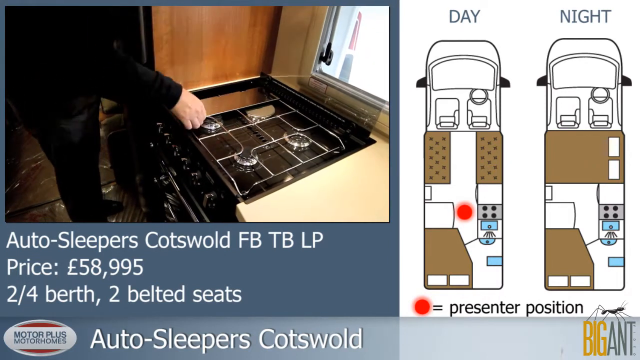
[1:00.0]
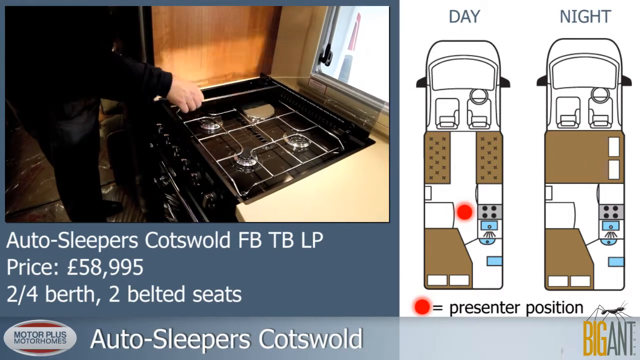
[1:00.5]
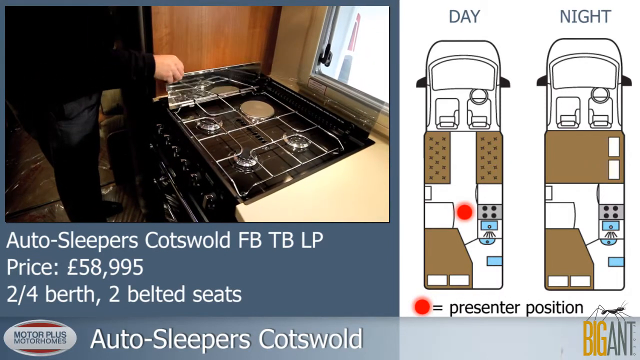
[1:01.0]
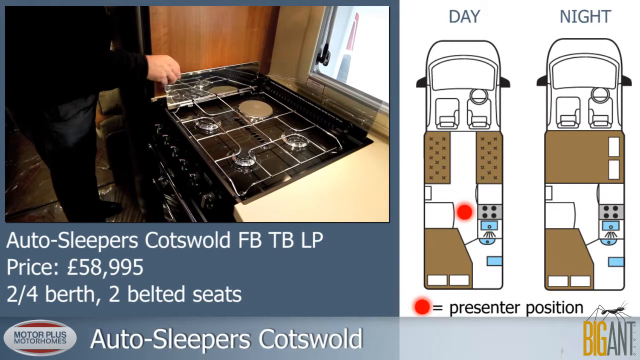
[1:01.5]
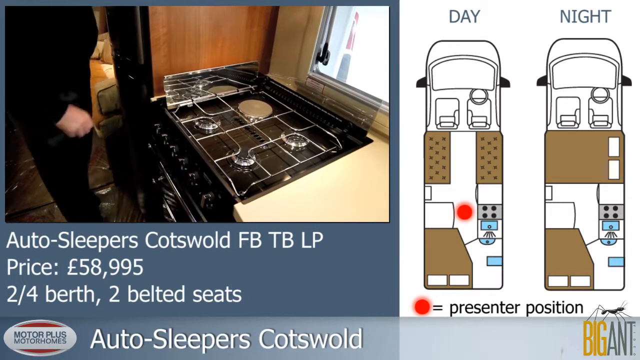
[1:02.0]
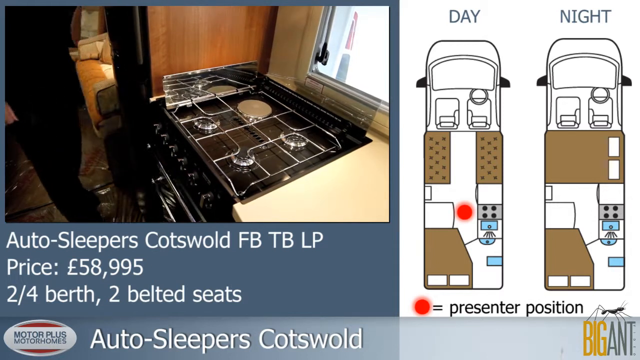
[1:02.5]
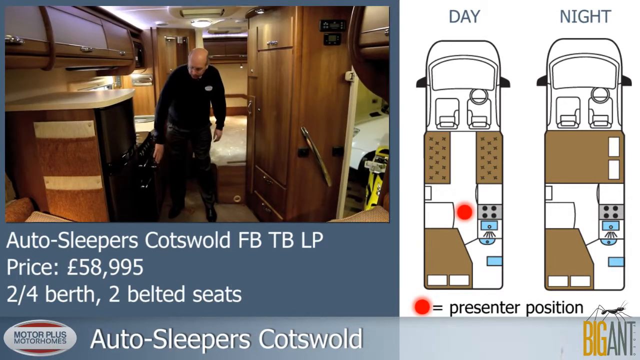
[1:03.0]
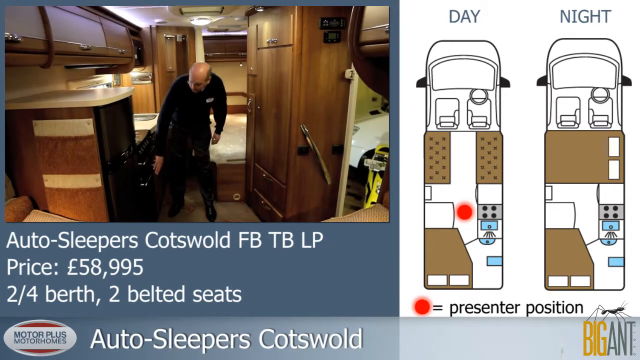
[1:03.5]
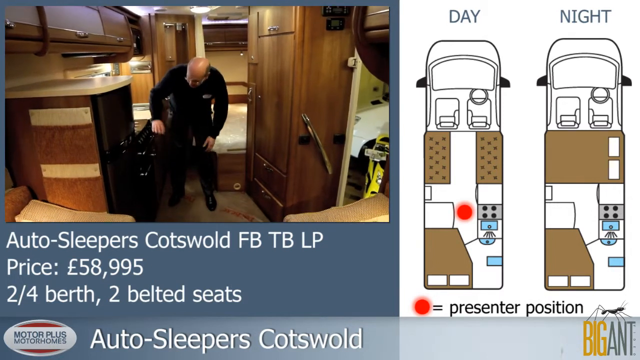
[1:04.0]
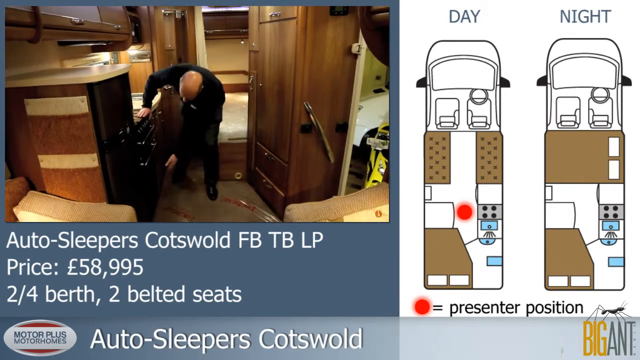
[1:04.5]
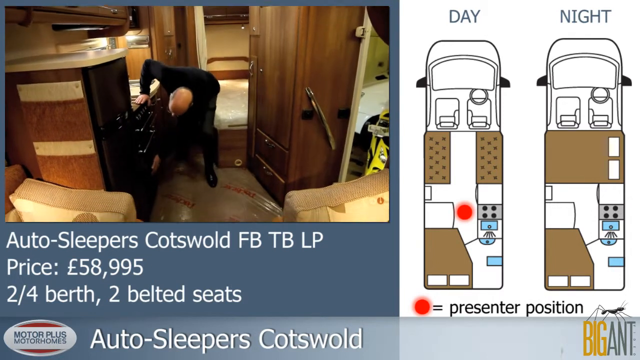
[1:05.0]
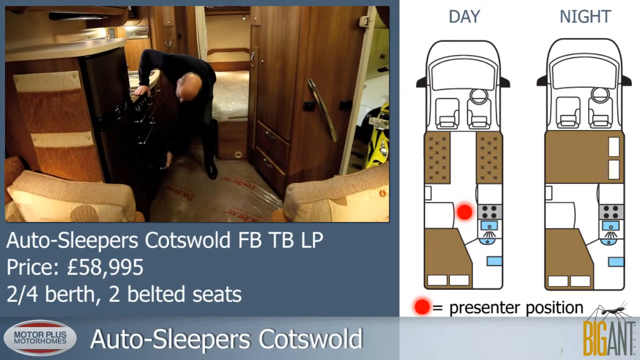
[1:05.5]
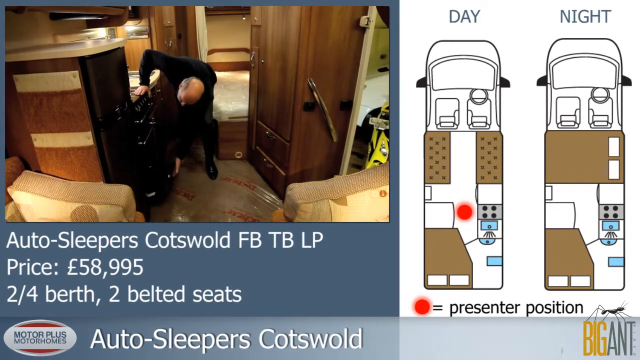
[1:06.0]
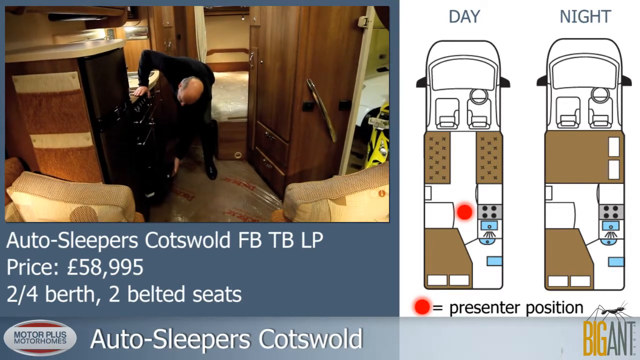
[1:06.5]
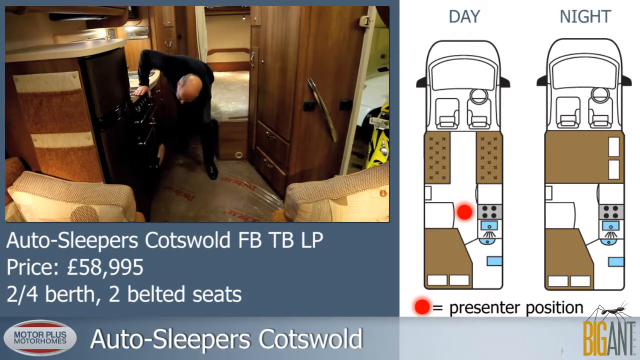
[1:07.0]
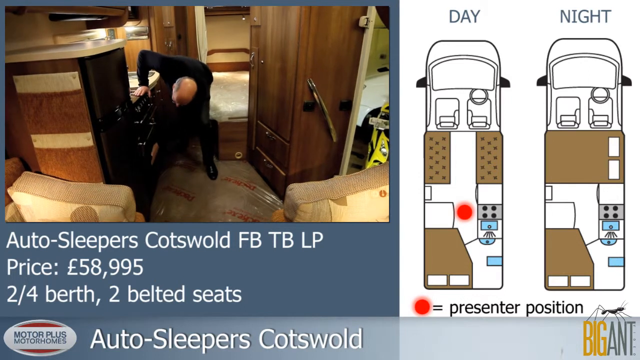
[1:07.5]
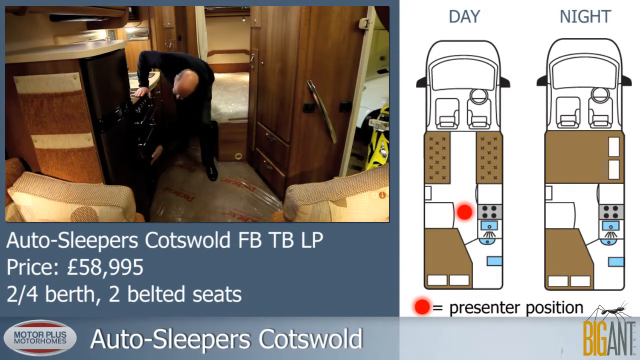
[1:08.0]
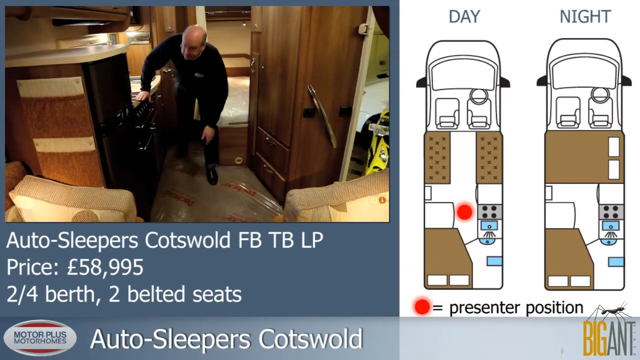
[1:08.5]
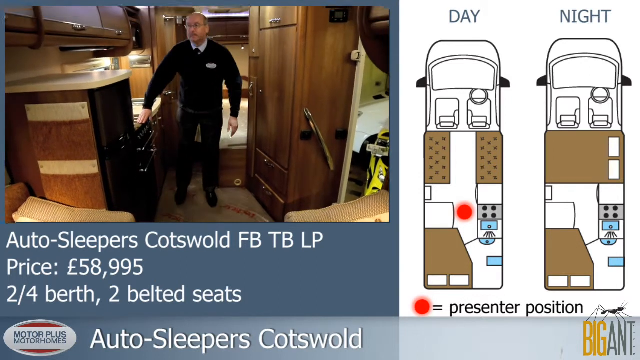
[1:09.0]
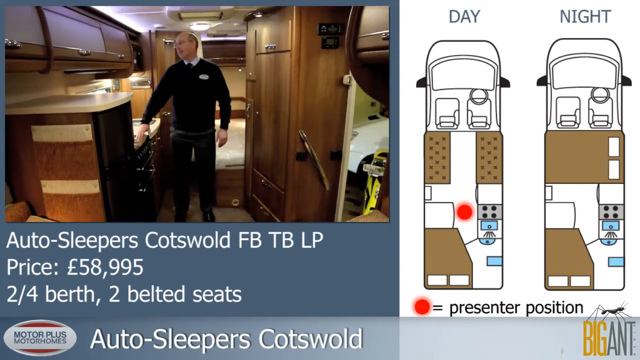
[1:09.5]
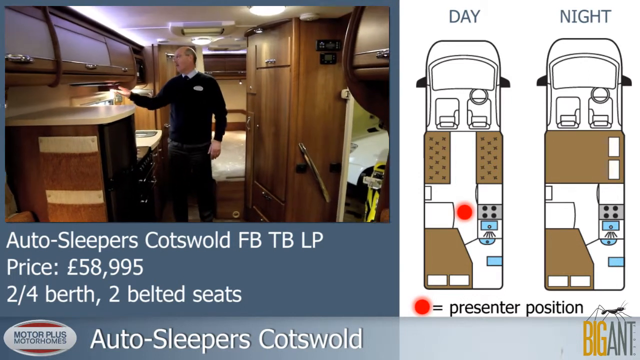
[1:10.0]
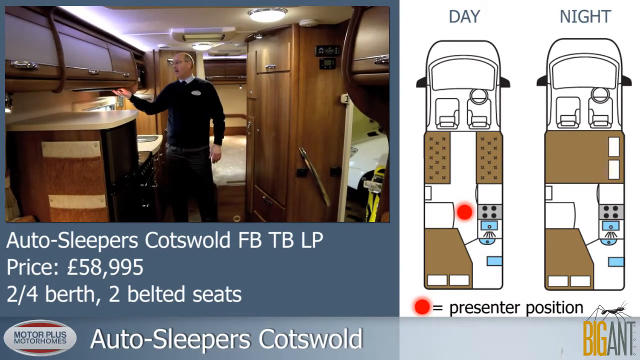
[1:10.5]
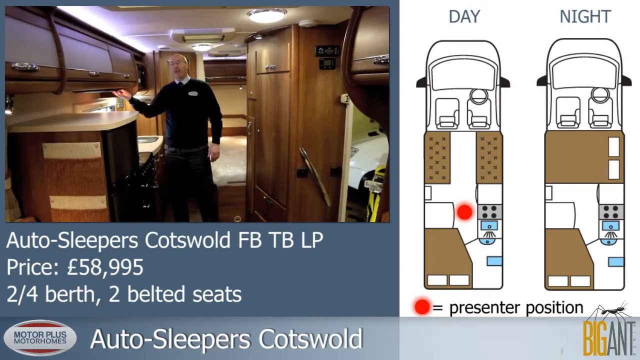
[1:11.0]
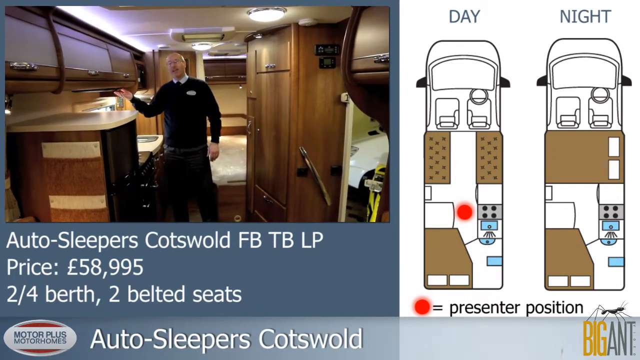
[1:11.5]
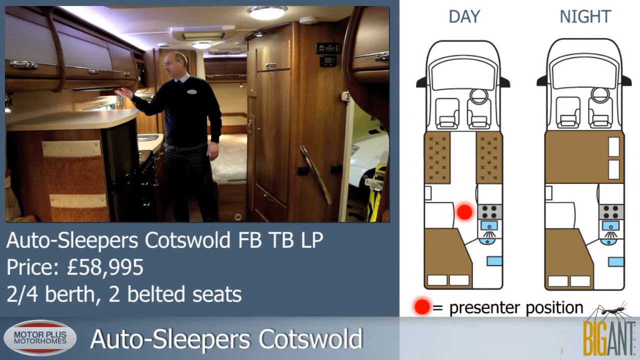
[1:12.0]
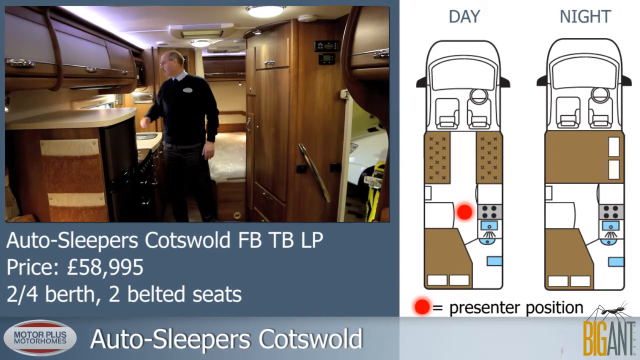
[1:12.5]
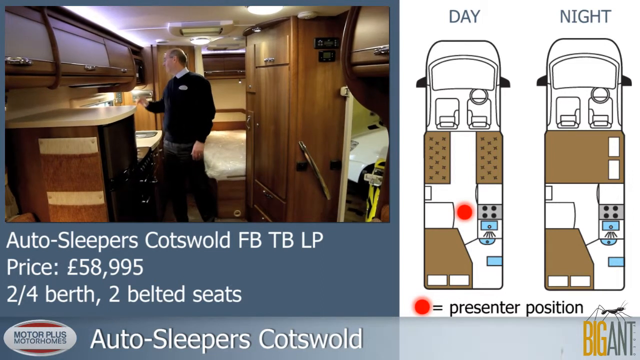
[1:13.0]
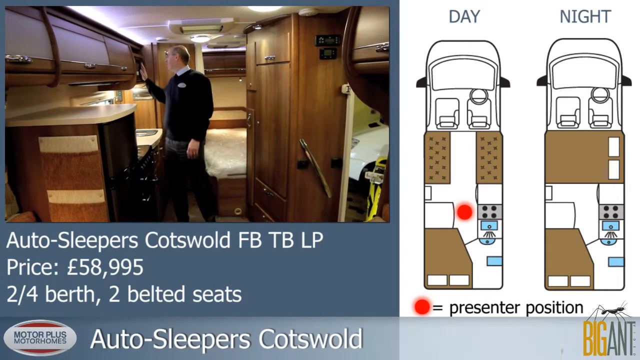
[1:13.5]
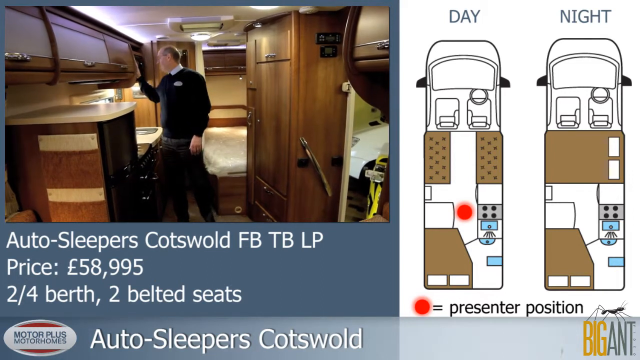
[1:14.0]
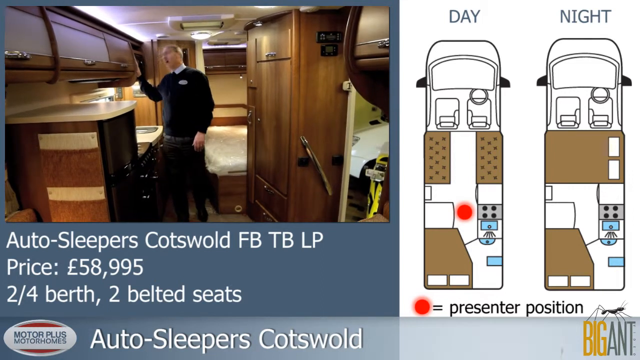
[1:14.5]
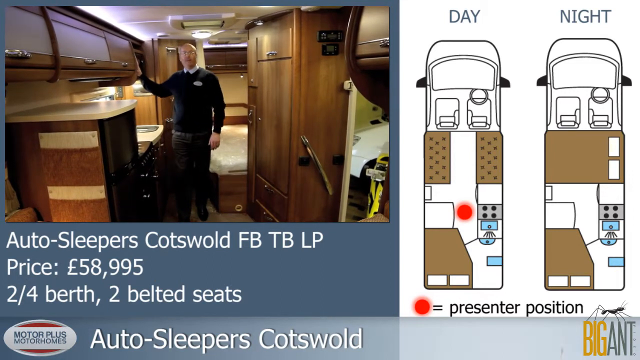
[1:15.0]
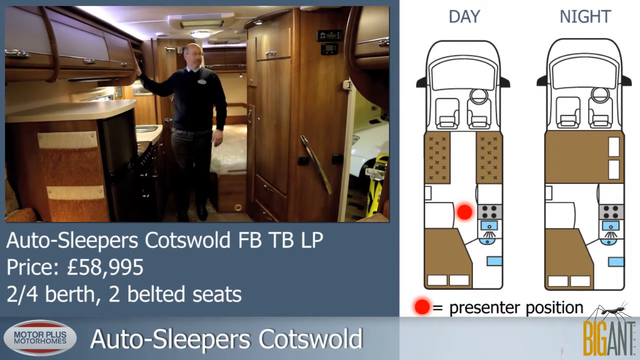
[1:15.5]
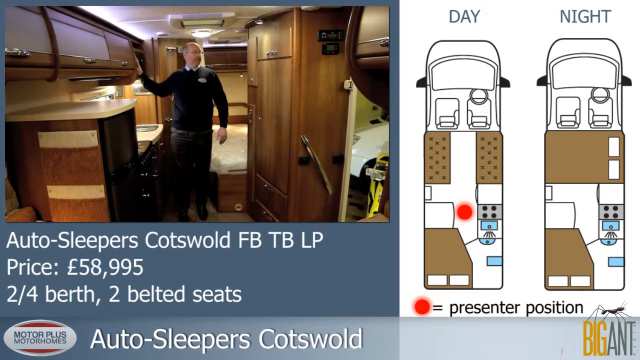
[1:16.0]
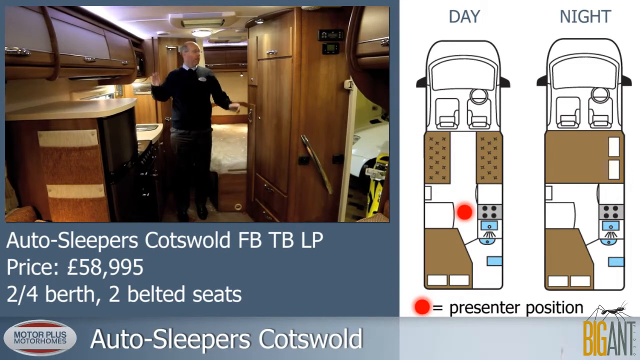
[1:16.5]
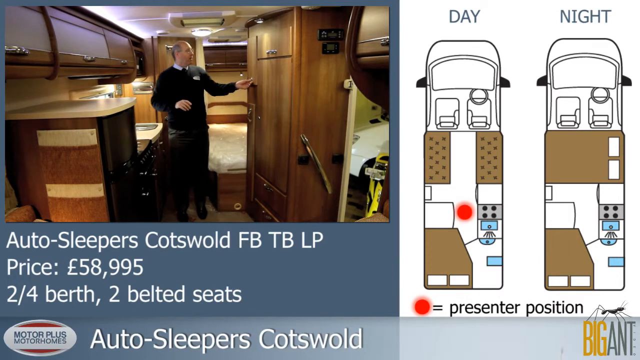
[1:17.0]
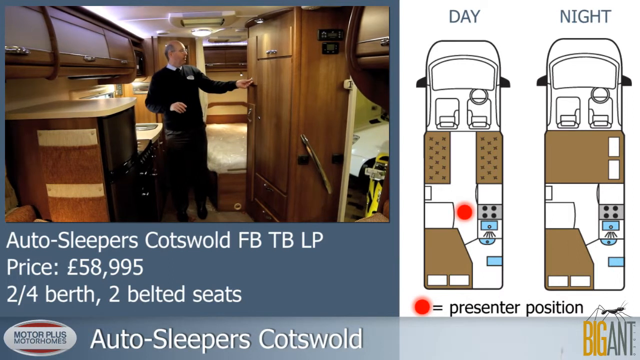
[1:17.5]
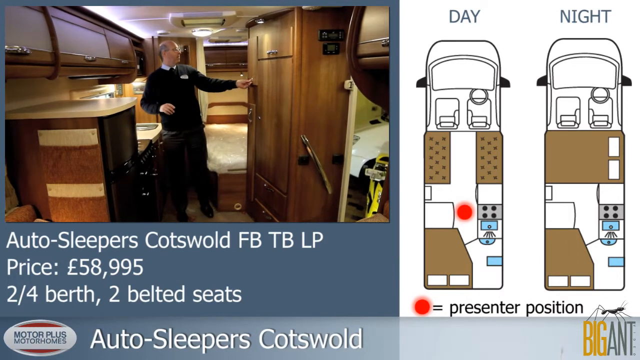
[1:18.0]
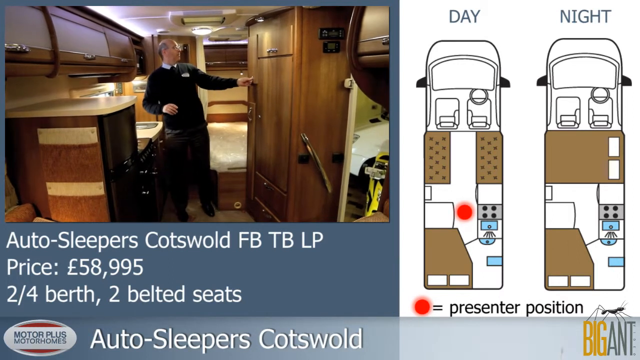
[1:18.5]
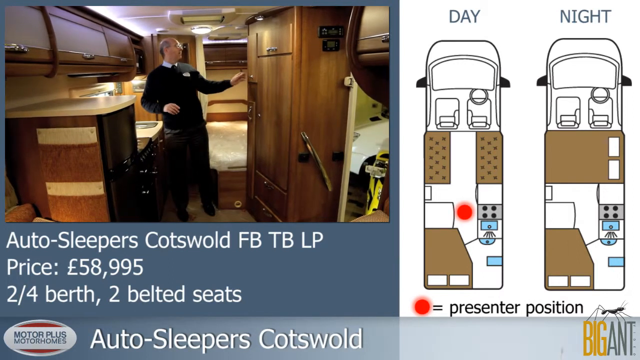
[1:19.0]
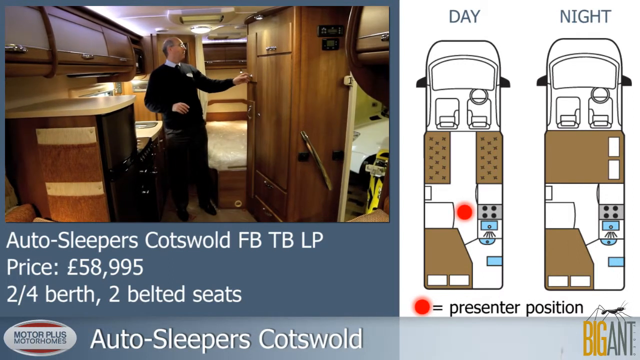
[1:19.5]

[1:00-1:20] Having finished with the hob, the salesman opens the main oven compartment. He shows off the lighting in the kitchenette, looks at the overhead storage and opens another small compartment. He wears a black jumper, black shoes, and a dark tie with a white shirt. The side door of the motorhome, on the left-hand side of the vehicle, is open, and a white car is parked outside.